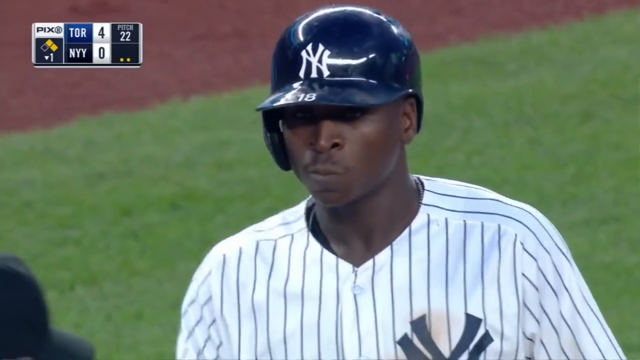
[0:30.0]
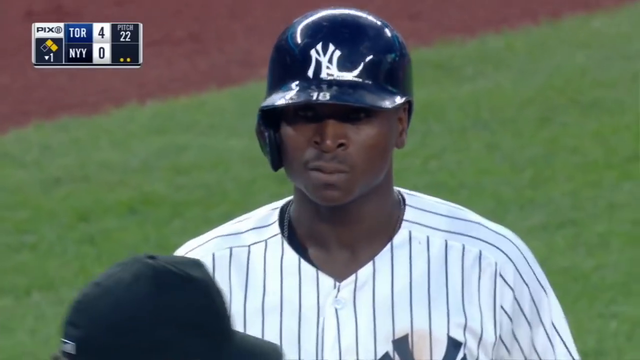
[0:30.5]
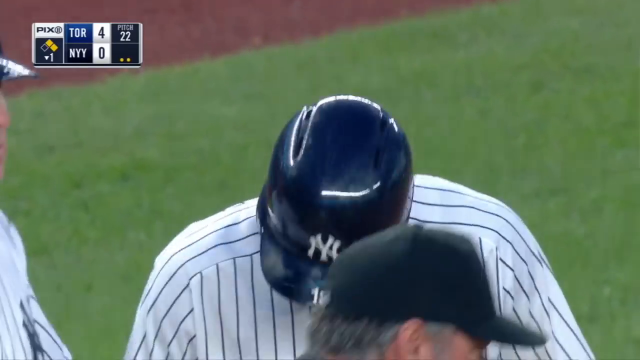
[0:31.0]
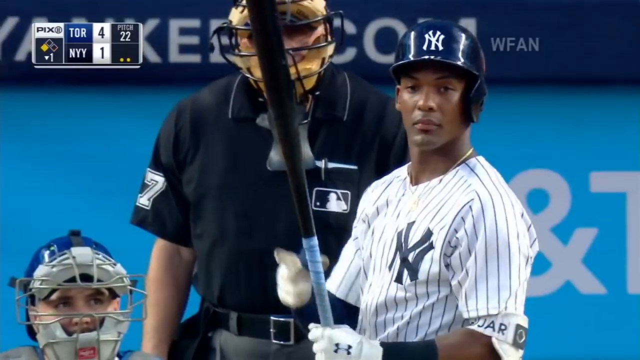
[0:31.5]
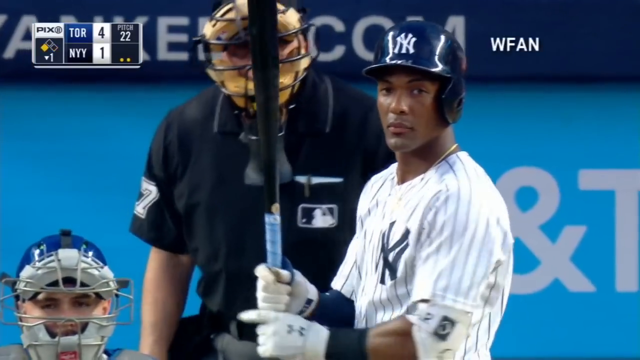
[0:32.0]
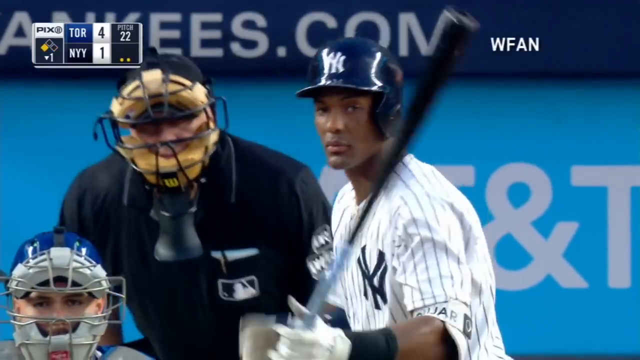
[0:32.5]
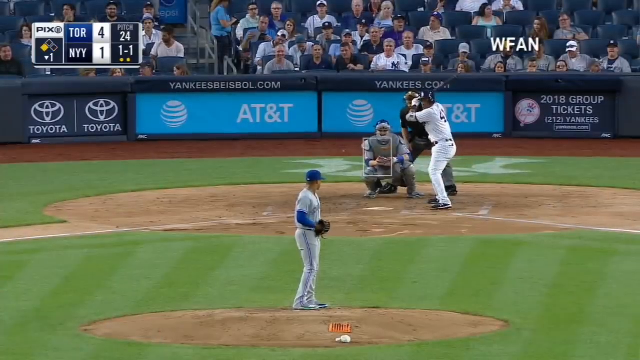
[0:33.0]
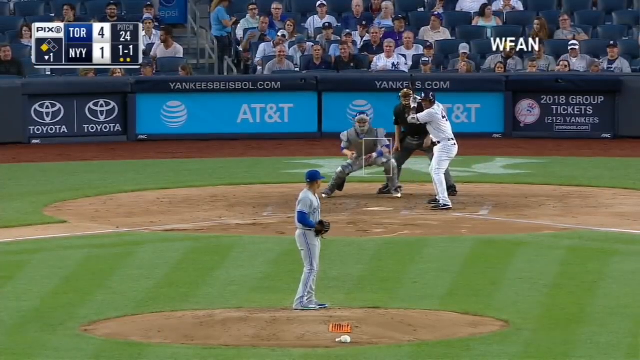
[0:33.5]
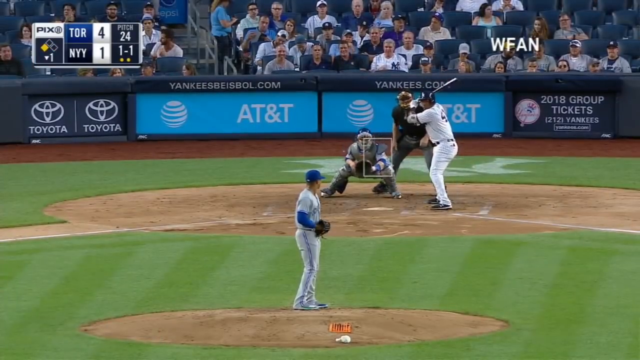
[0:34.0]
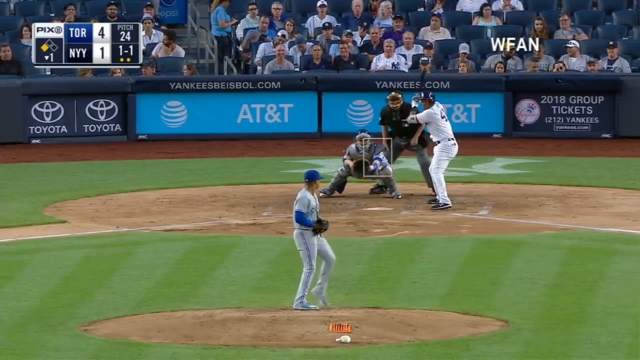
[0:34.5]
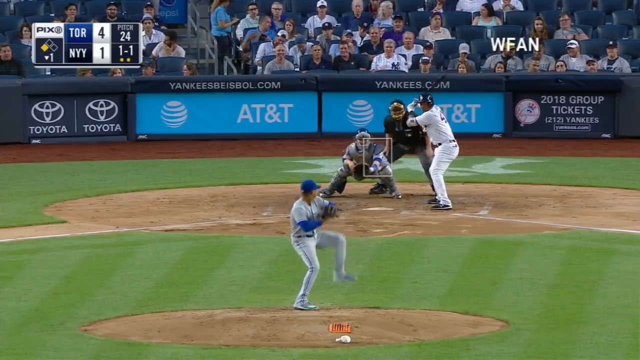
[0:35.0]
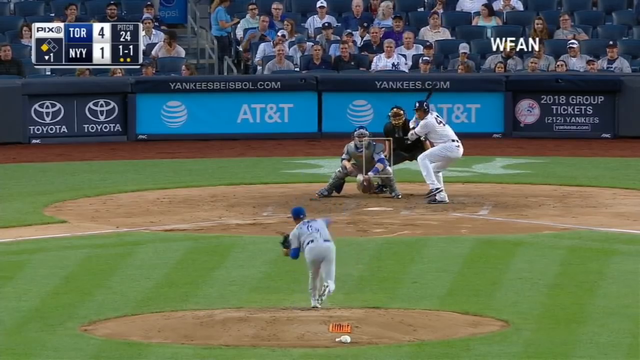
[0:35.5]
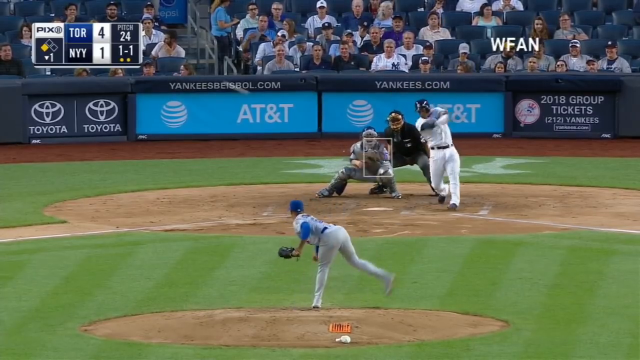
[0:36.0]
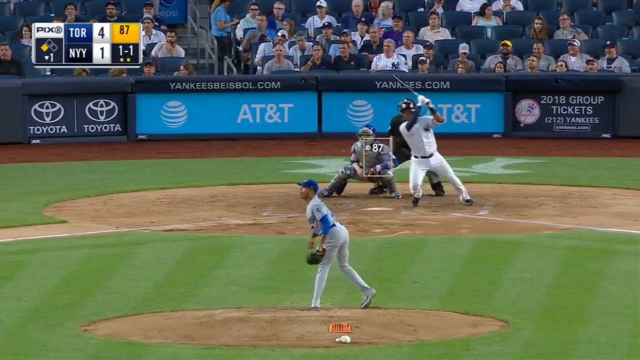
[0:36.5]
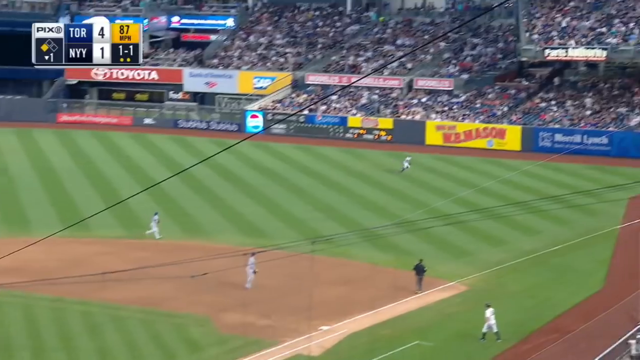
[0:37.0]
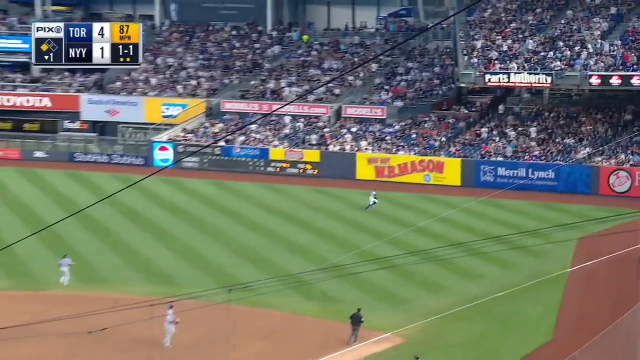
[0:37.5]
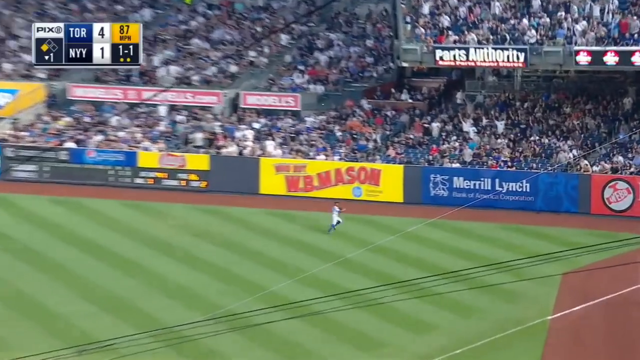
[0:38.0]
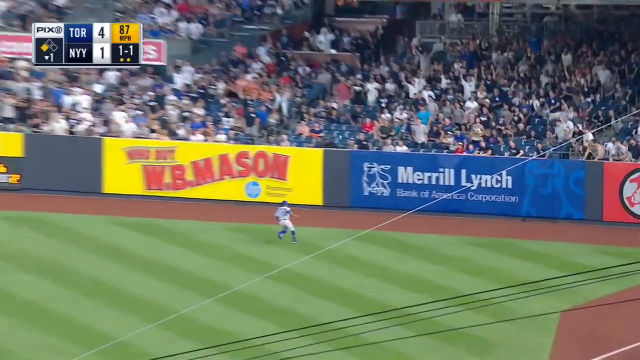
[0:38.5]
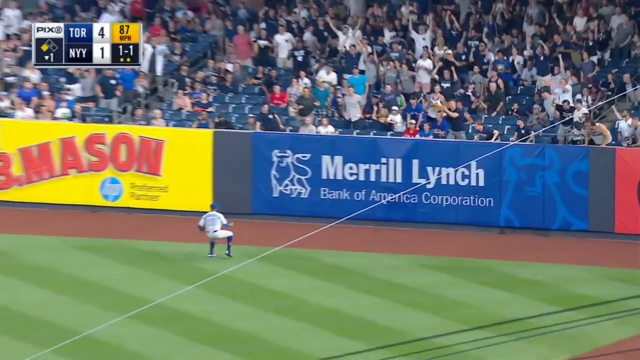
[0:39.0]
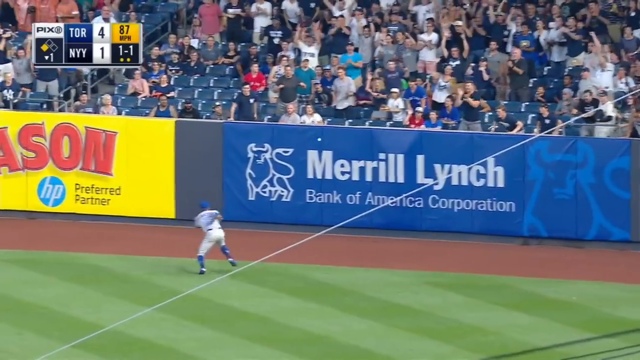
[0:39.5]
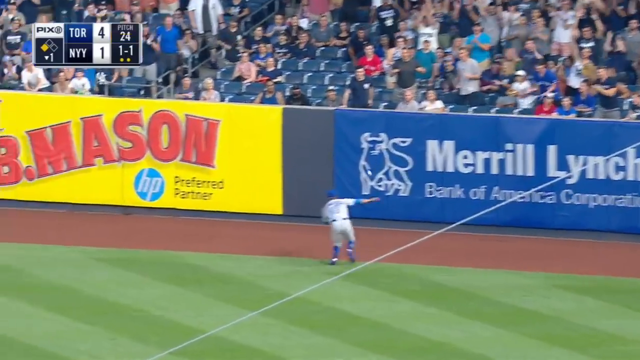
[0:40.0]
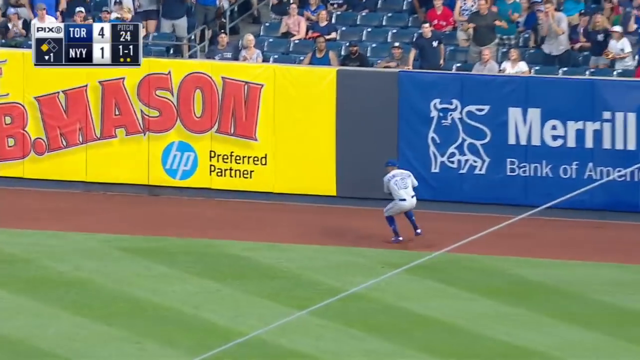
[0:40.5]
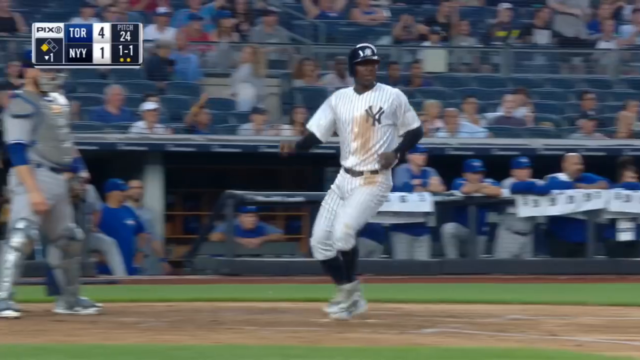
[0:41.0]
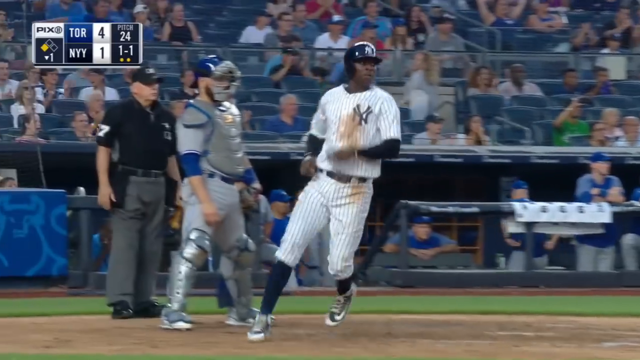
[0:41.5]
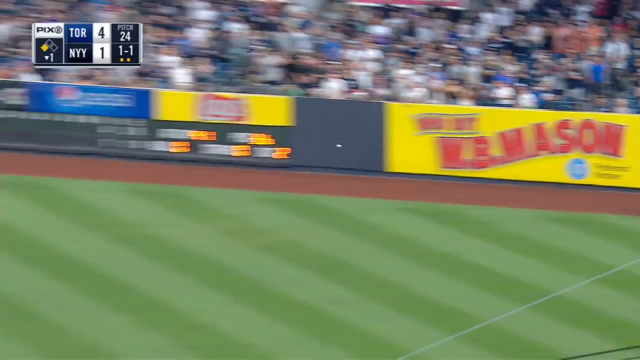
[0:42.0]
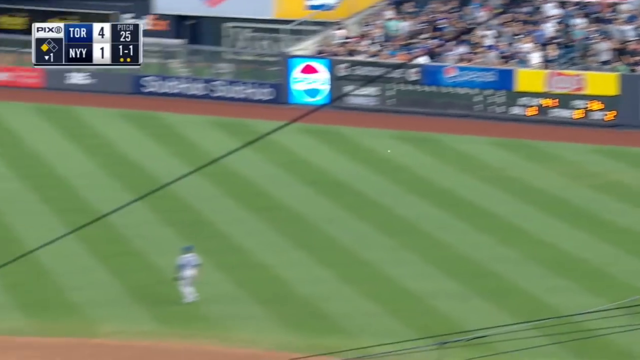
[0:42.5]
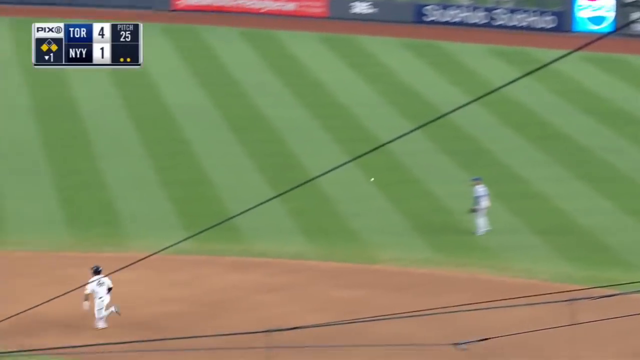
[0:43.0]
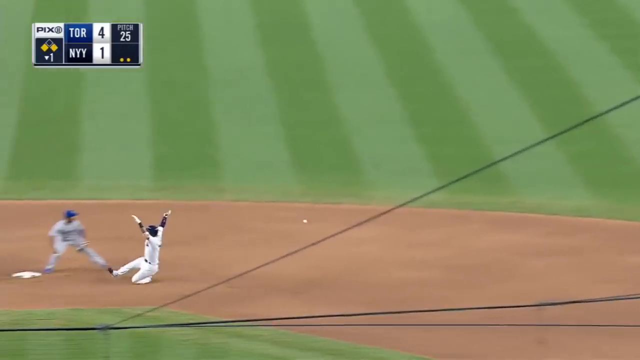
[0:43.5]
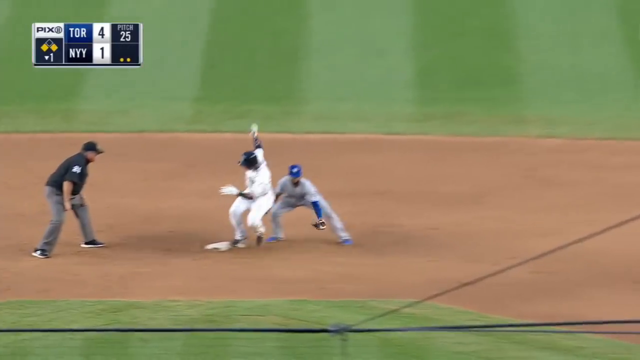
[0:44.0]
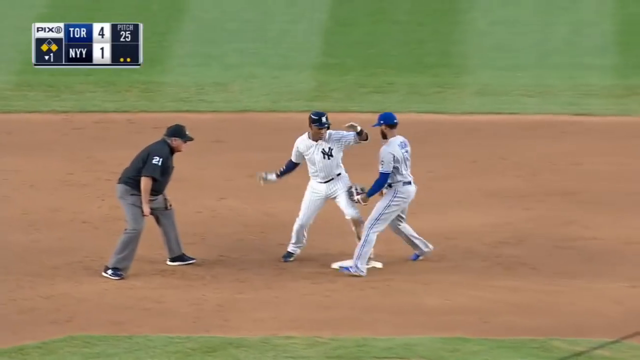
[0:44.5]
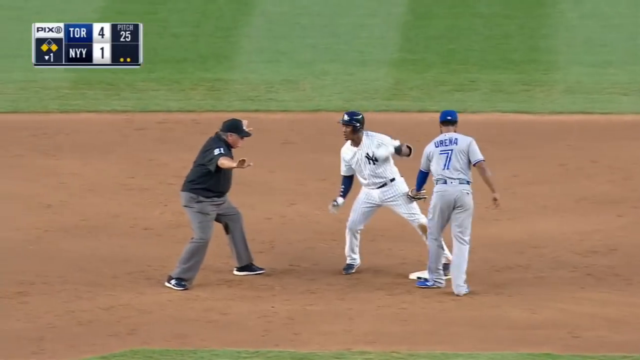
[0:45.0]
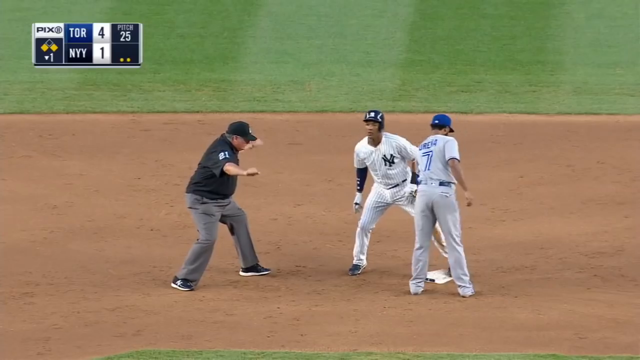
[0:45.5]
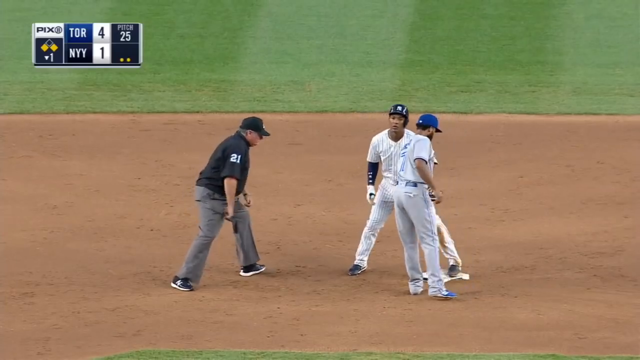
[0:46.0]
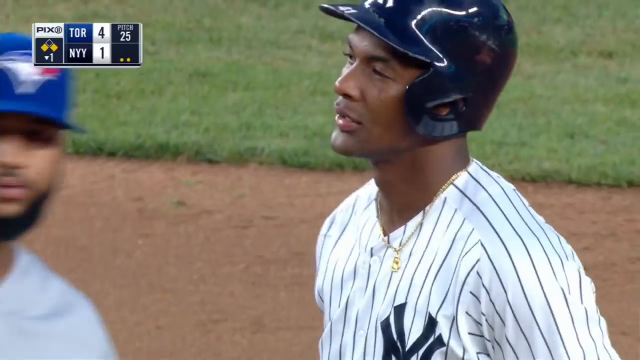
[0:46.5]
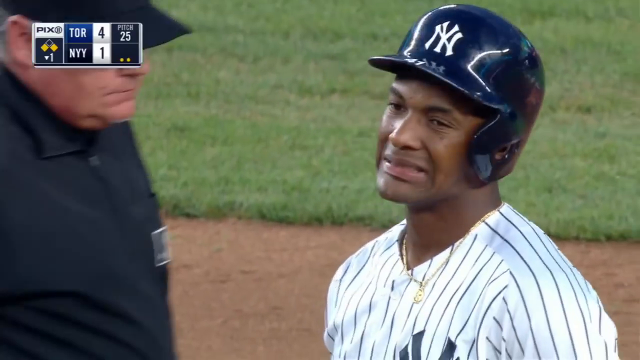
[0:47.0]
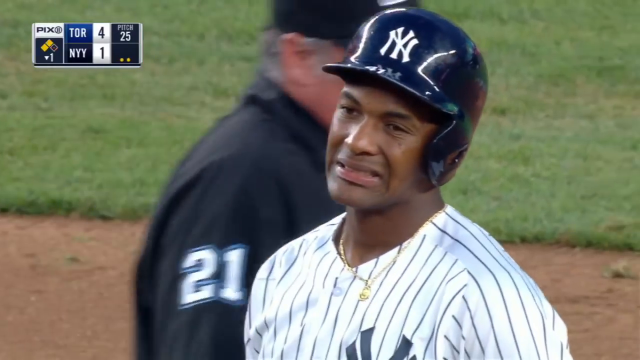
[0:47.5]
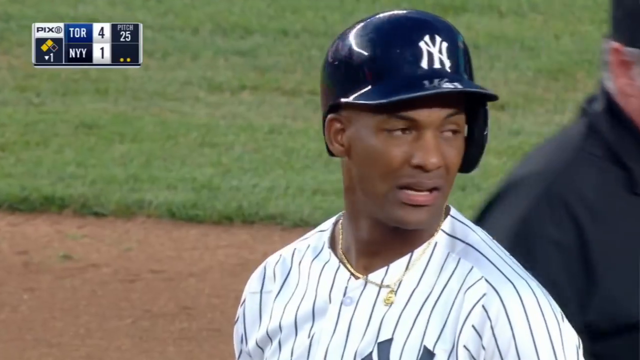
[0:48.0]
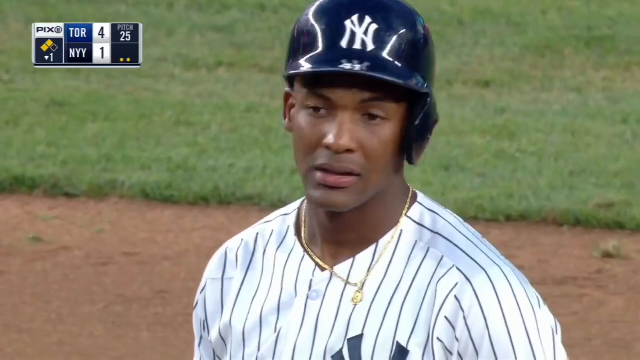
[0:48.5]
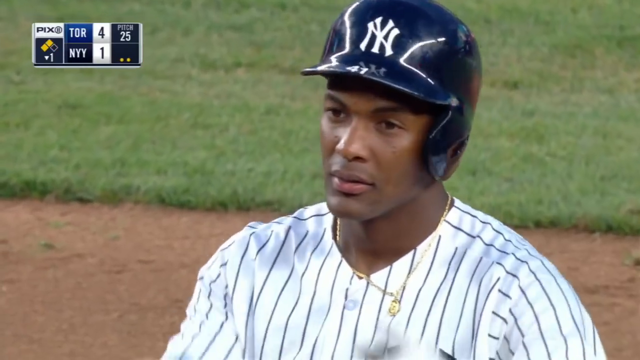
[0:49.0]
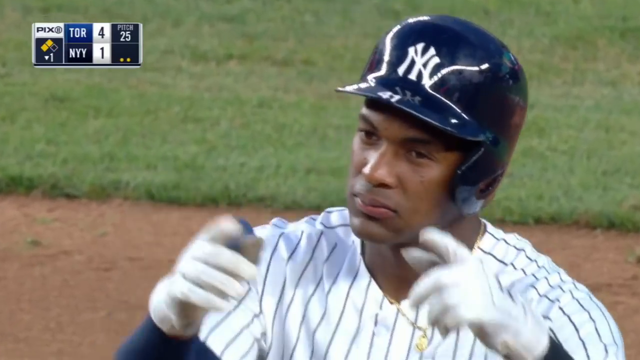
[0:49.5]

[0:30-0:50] A right-handed batter stands ready to receive a pitch, his bat facing the left of the screen. He receives the pitch and hits it all the way out to the boundary, where a fielder collects it and slings it back in to a baseman. It looks like the New York Yankees player was almost out, and he briefly pulls a kind of anxious face. A rectangle graphic is over the catcher, who stands behind the batter.